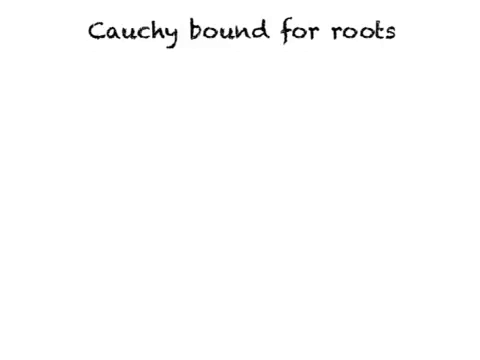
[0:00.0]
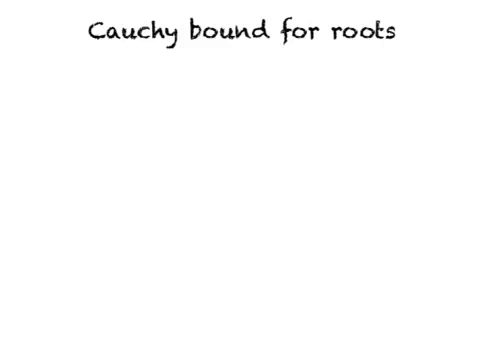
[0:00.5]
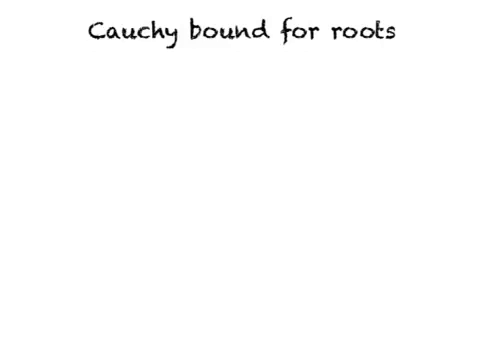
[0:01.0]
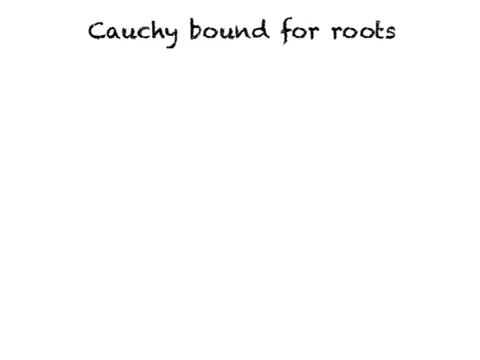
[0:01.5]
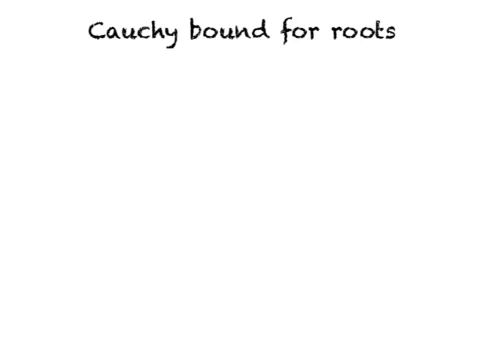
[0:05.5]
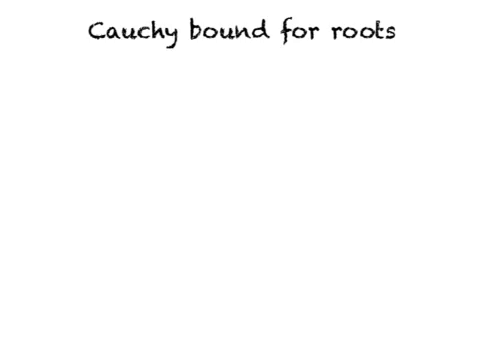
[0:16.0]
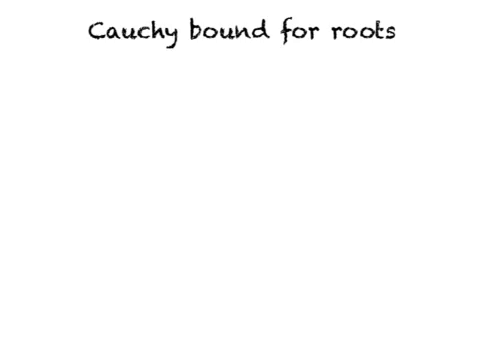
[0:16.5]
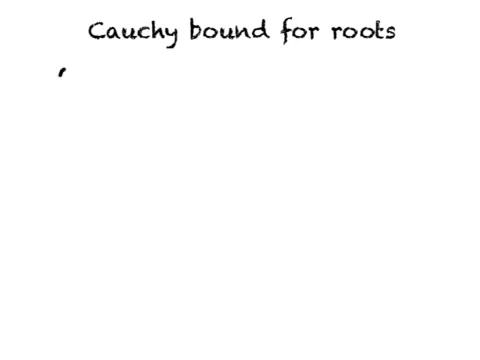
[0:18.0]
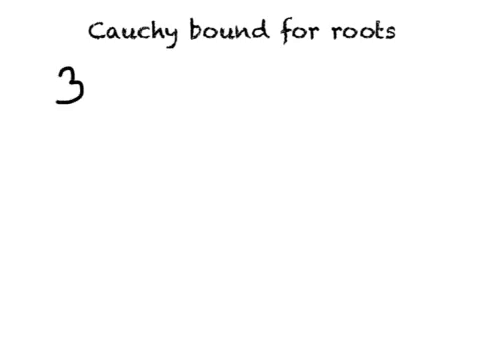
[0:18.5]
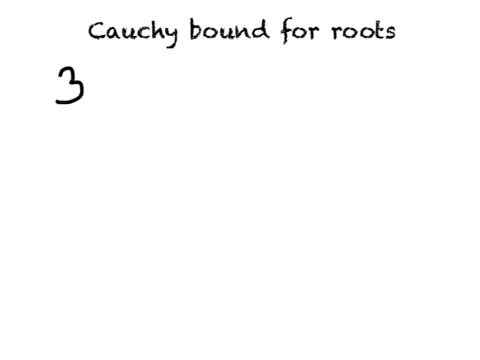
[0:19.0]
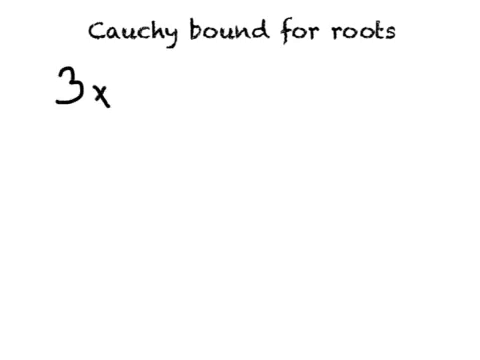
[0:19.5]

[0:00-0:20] The video begins with a white screen with the words "Cauchy bound for roots" at the top. The title is in a handwritten script, as if someone sketched it out rather than typed it, and in a smaller font, so it takes up only the top of the screen while the entire rest of the page is white. For the first few seconds only the title is visible. Then the number 3 and an X appear; the X could be a multiplication symbol or the letter X.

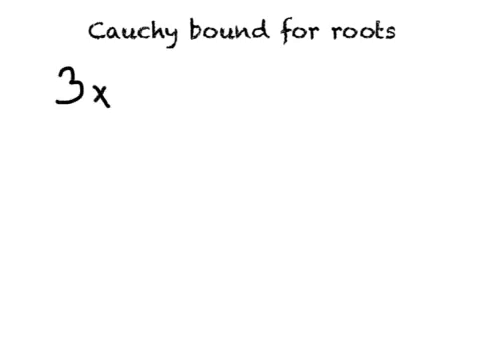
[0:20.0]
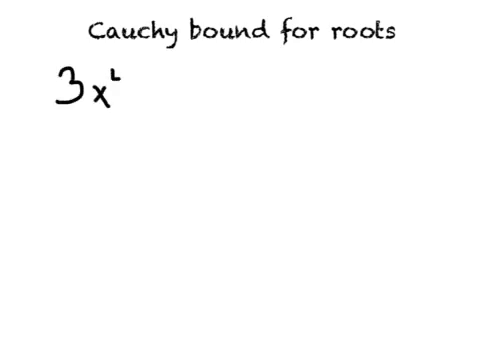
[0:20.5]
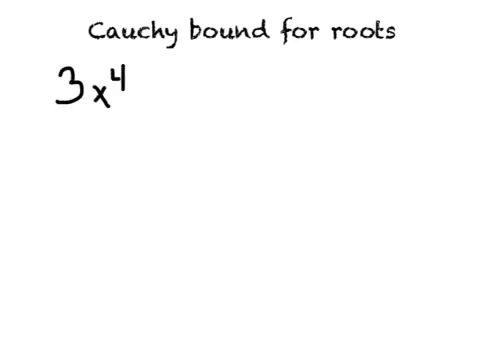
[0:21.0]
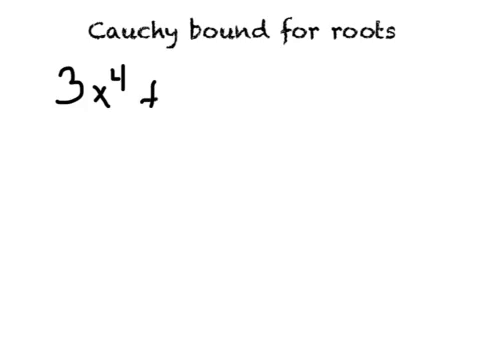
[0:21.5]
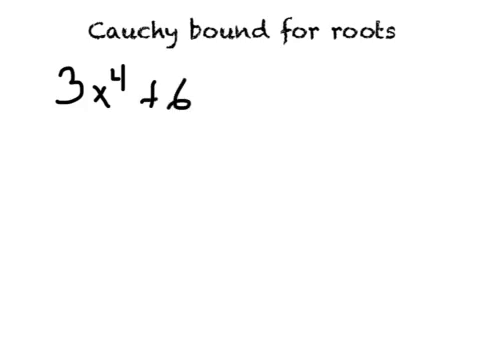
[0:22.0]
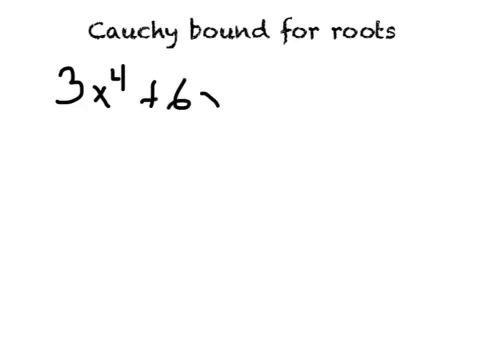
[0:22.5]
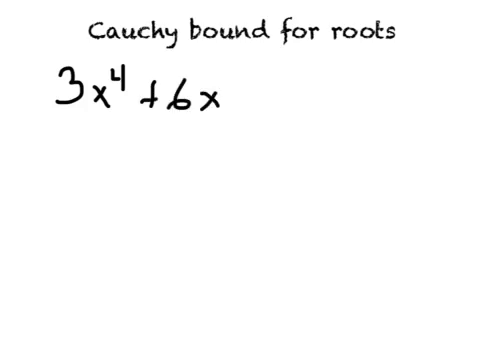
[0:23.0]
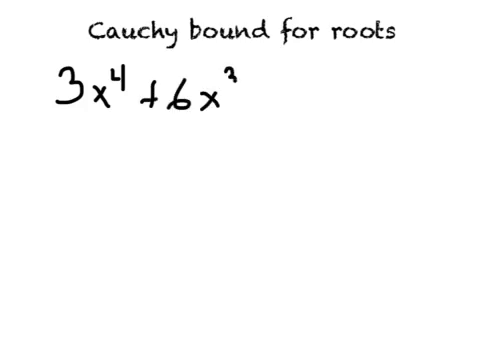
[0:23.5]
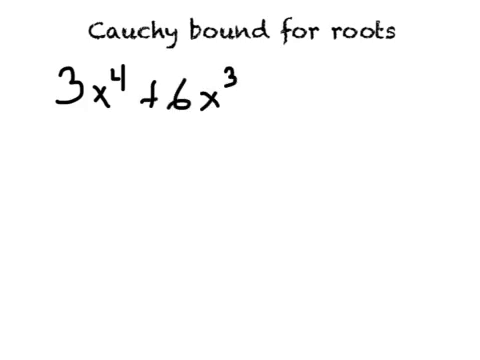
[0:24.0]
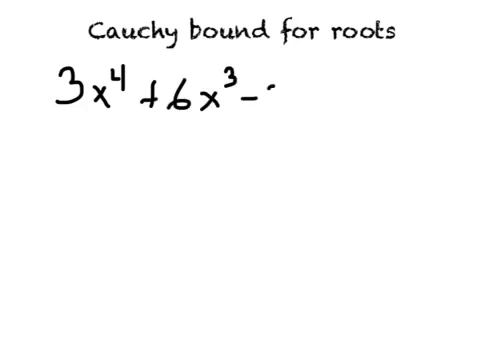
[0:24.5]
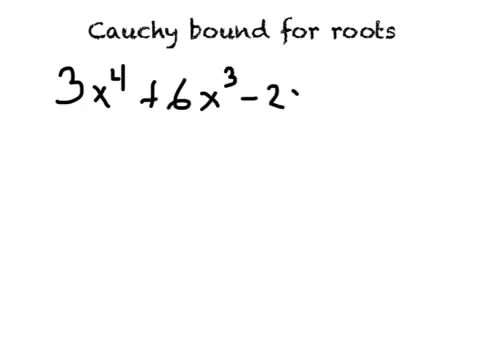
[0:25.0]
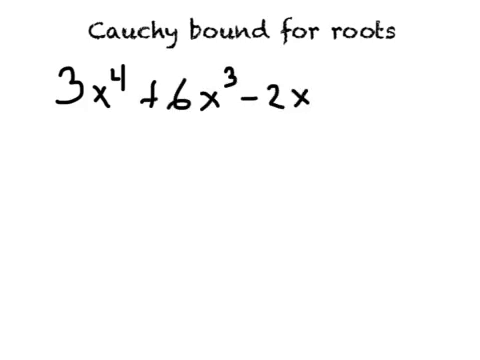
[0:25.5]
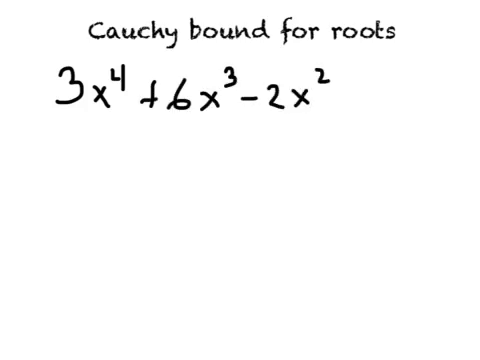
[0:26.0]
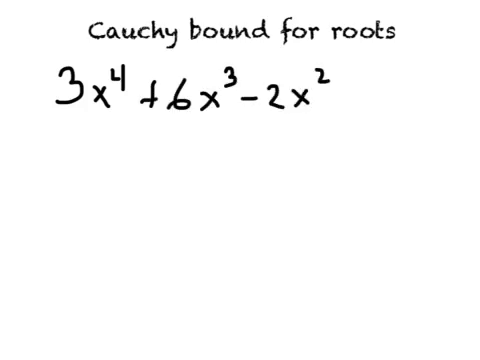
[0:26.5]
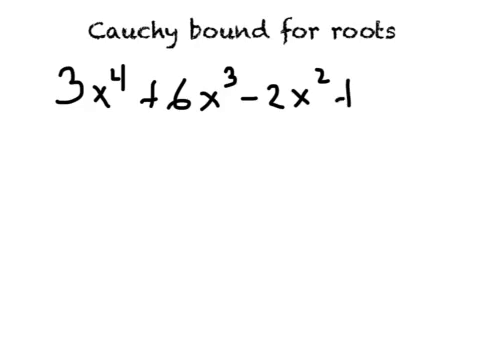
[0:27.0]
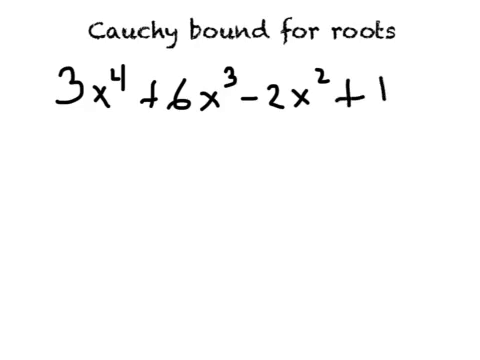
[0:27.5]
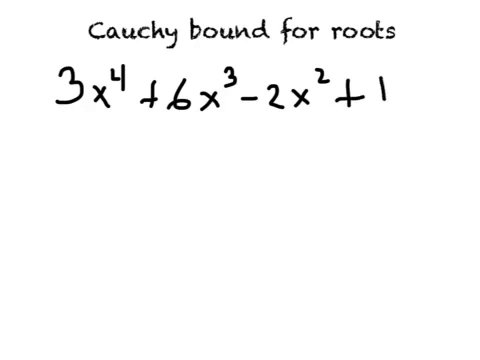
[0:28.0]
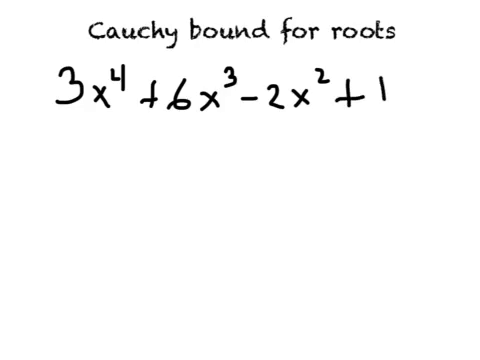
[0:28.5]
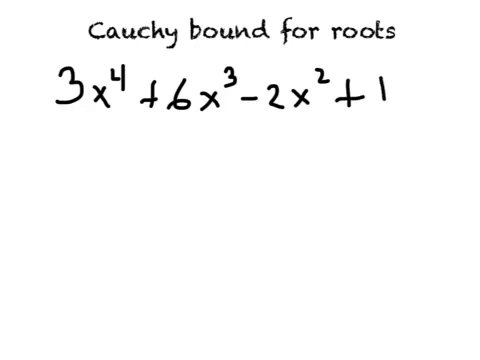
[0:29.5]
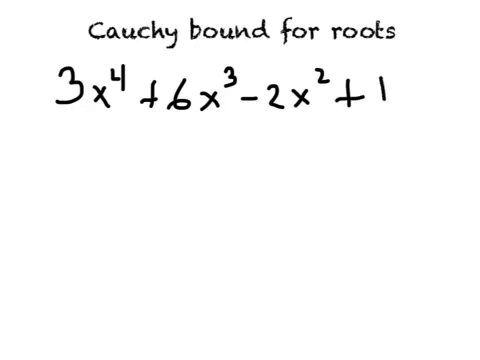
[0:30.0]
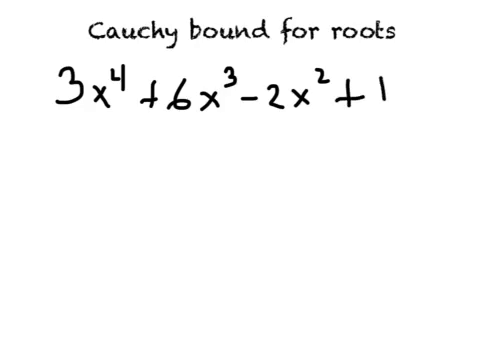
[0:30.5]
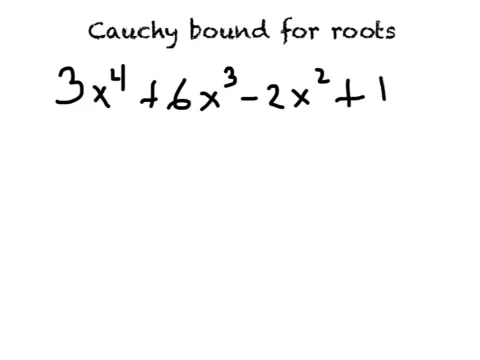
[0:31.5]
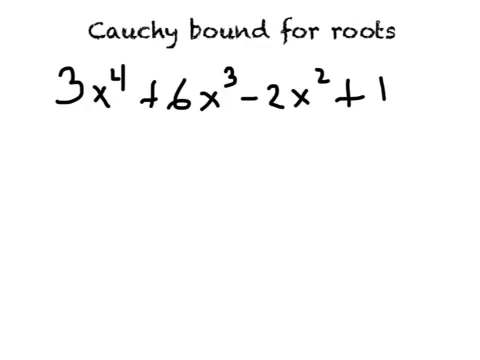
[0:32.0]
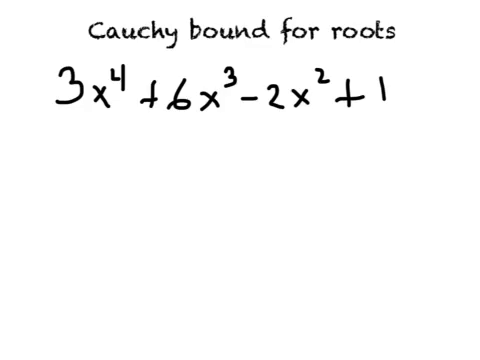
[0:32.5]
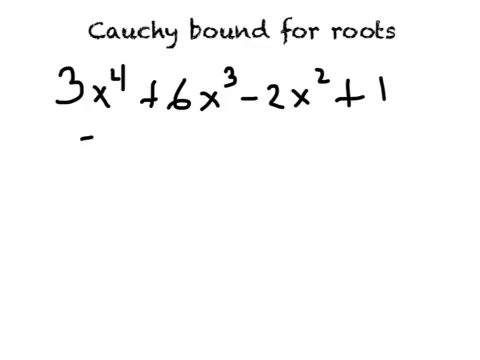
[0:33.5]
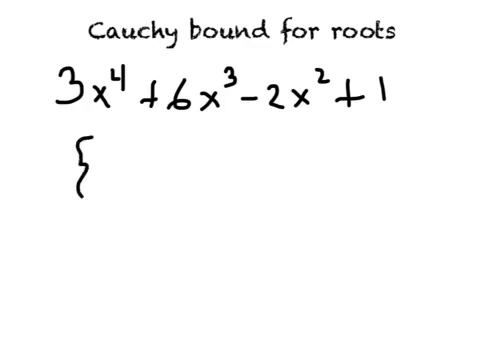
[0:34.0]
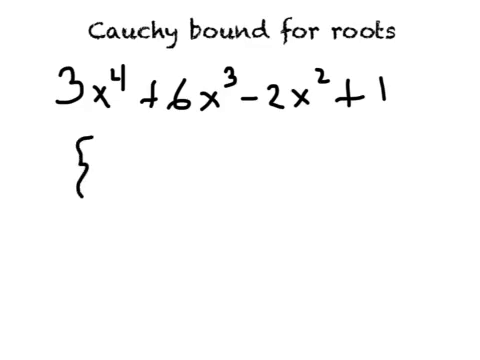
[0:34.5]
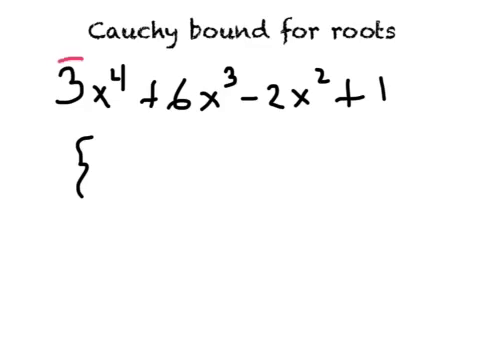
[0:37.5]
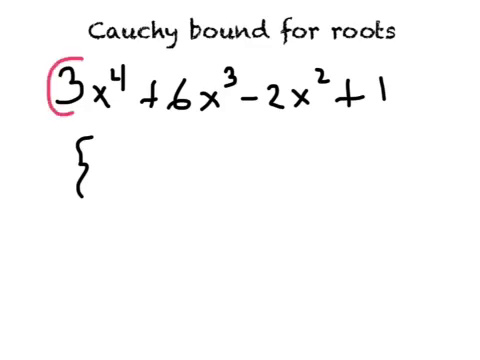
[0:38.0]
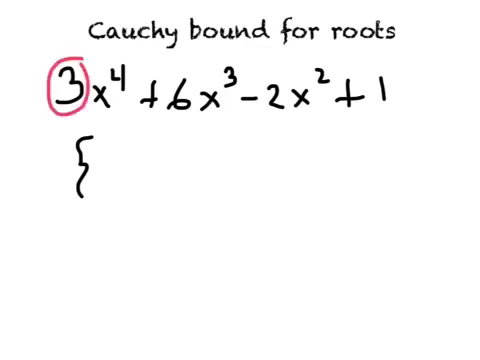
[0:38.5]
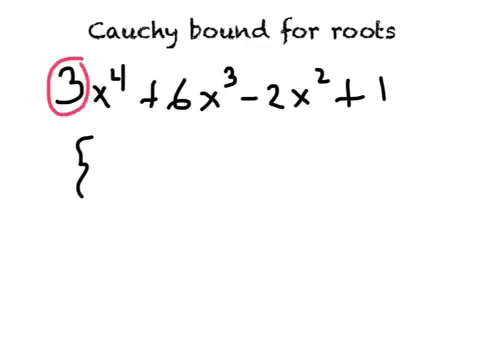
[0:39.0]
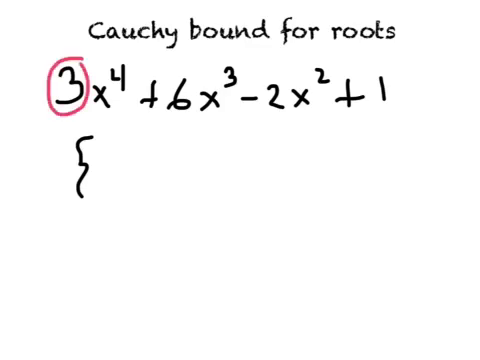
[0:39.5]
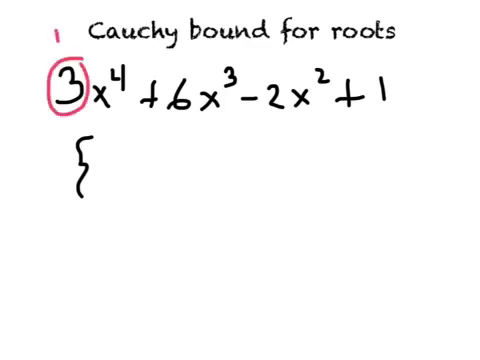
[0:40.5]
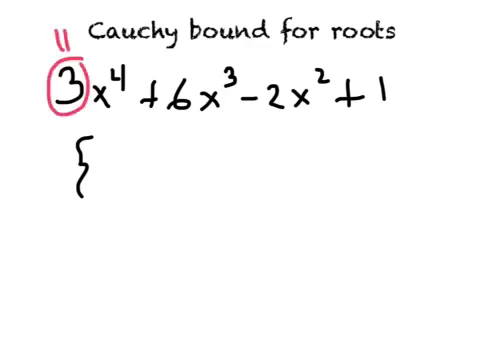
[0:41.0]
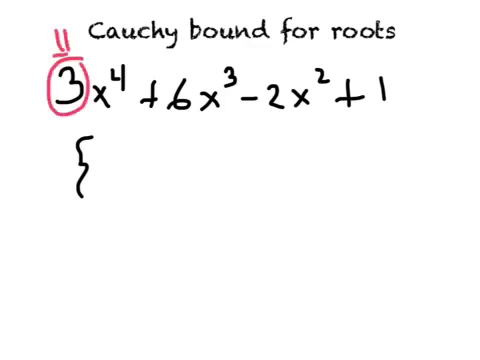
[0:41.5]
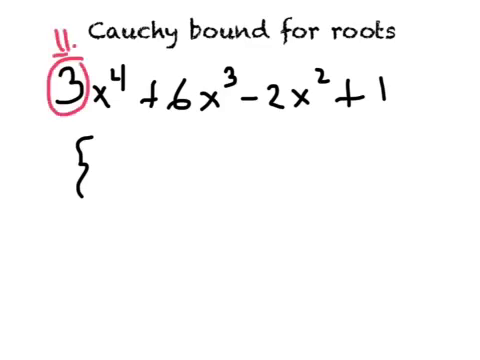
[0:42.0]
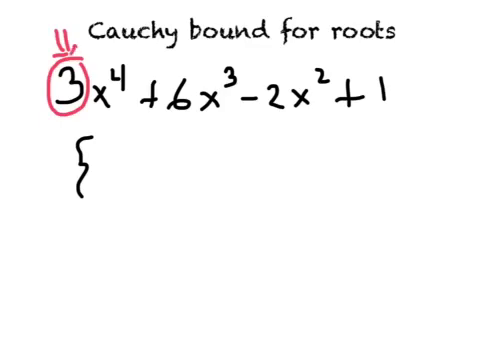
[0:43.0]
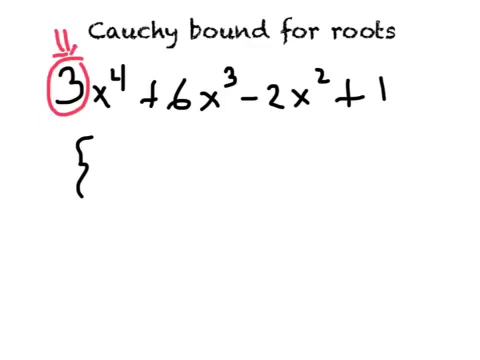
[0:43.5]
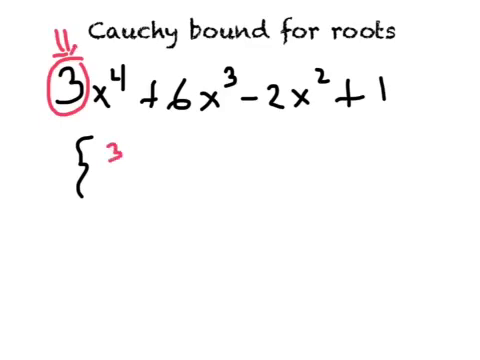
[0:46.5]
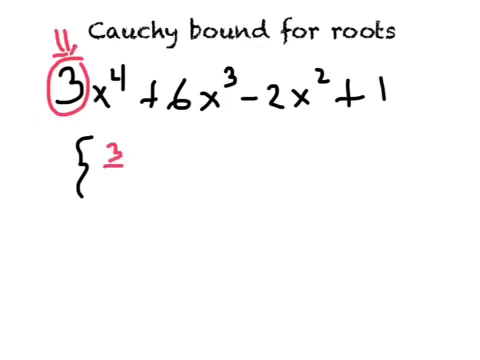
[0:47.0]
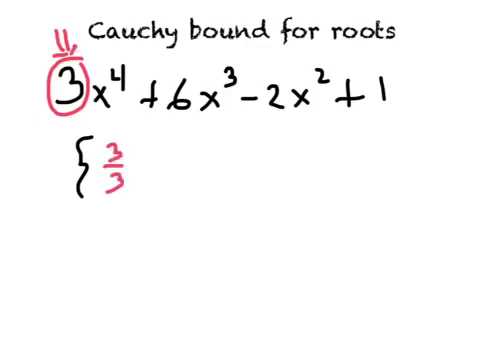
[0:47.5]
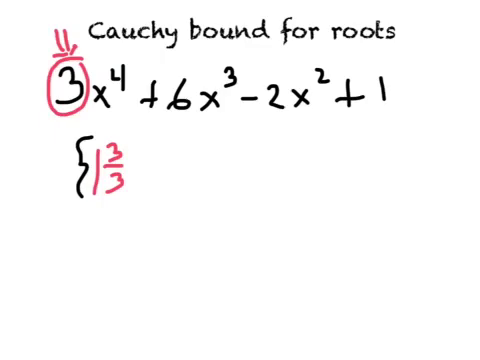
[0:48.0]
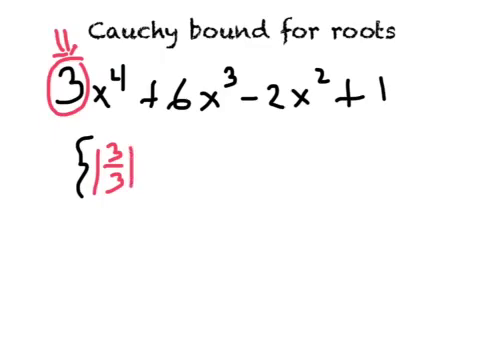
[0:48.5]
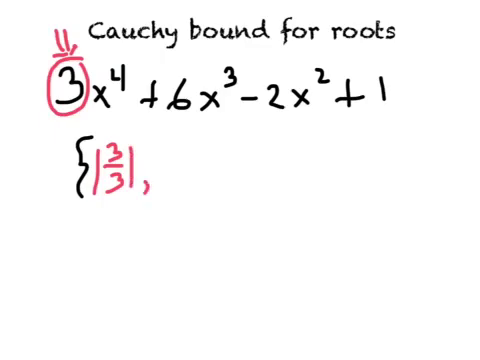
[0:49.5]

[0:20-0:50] The same white screen shows the handwritten title "Cauchy bound for roots" at the top in a smaller font. Starting from the 3x, writing proceeds to form 3x to the fourth power plus 6x to the third power minus 2x squared plus 1, written just below the title in black on the white background. It appears to be some type of algebraic formula. The writing of this problem is a little bigger than the title at the top.